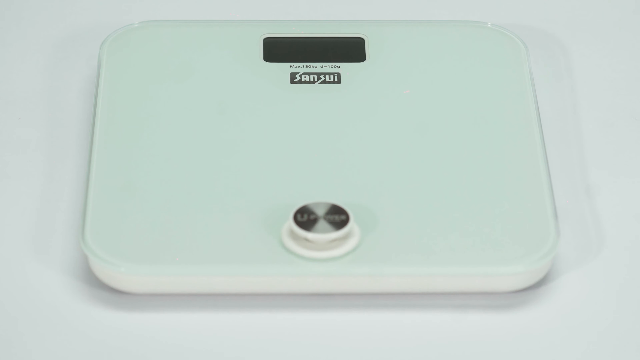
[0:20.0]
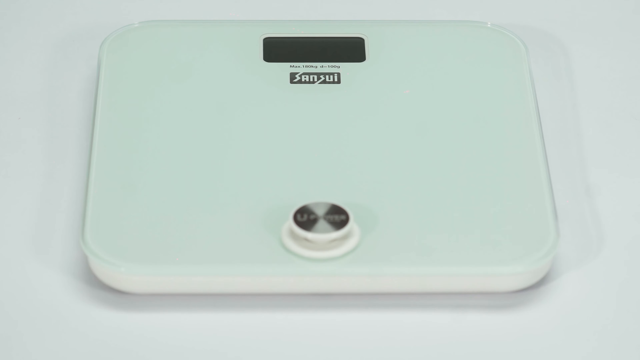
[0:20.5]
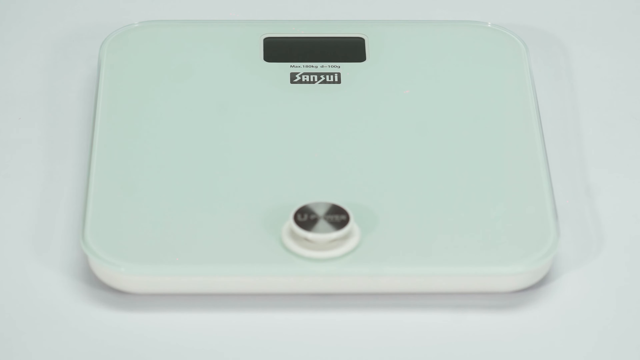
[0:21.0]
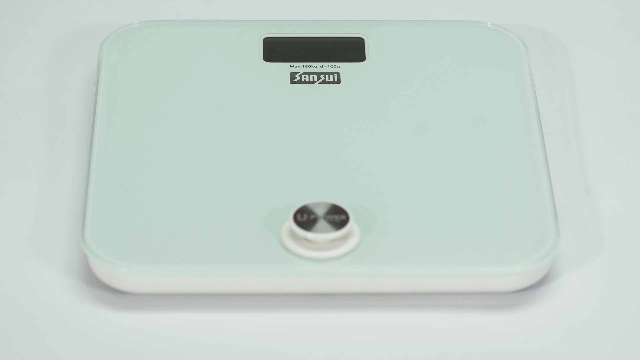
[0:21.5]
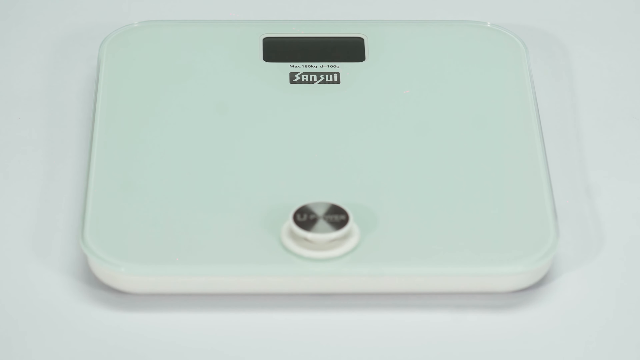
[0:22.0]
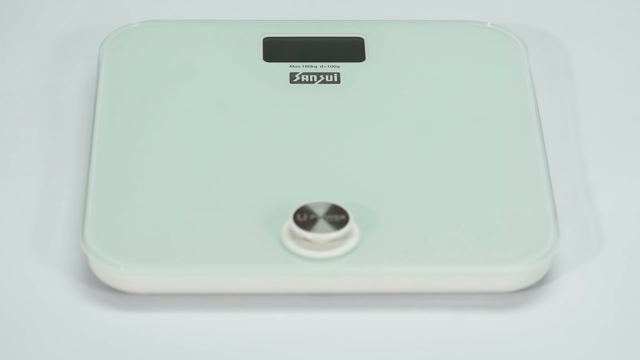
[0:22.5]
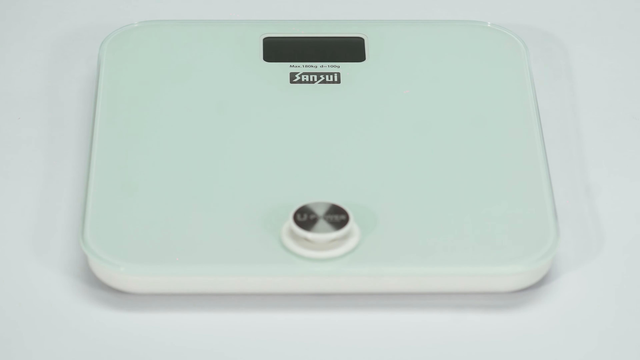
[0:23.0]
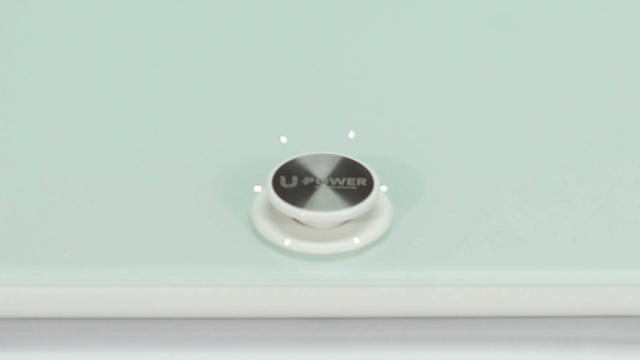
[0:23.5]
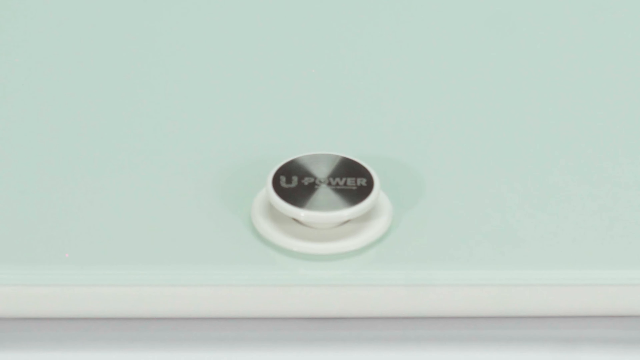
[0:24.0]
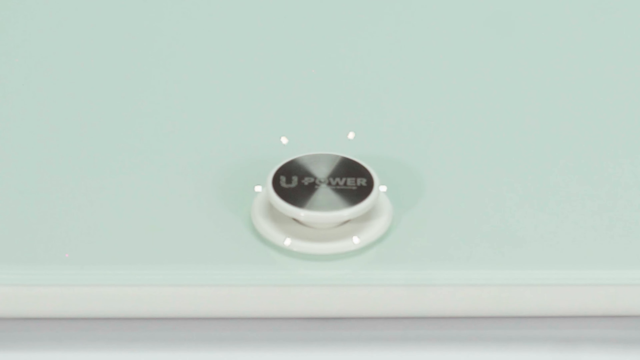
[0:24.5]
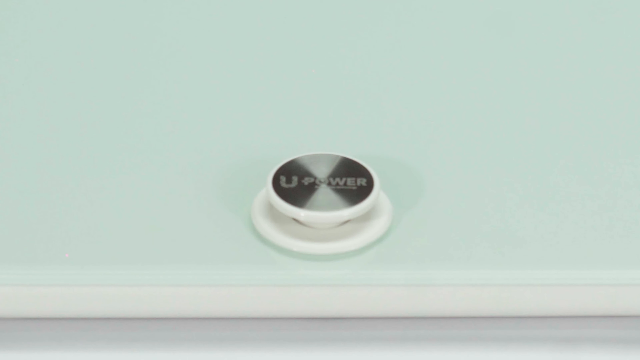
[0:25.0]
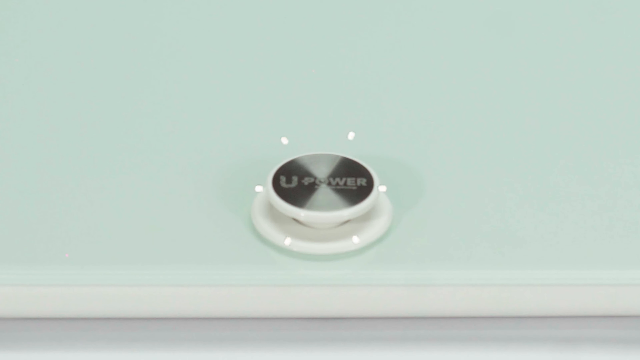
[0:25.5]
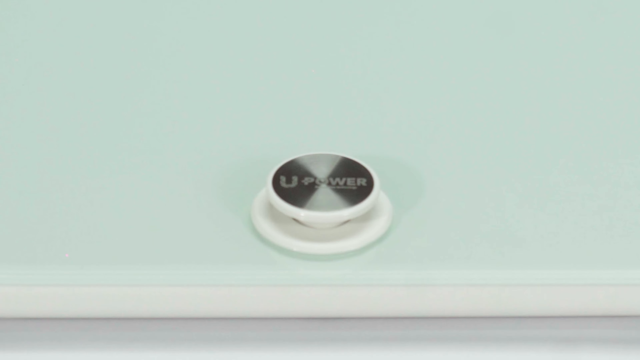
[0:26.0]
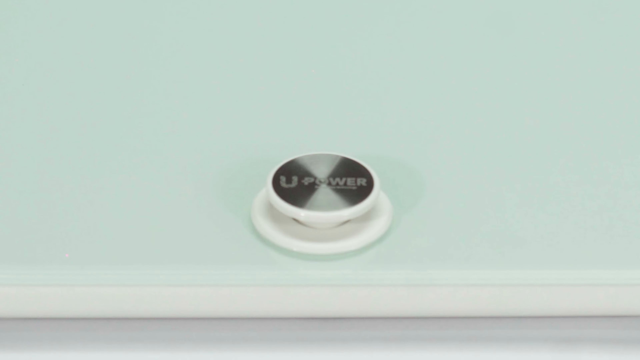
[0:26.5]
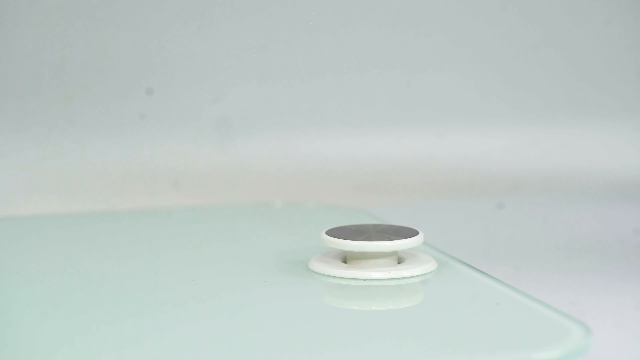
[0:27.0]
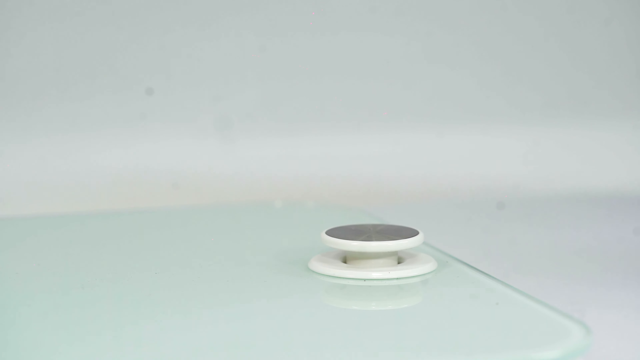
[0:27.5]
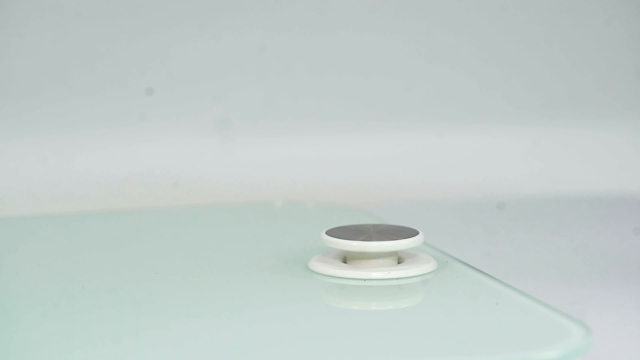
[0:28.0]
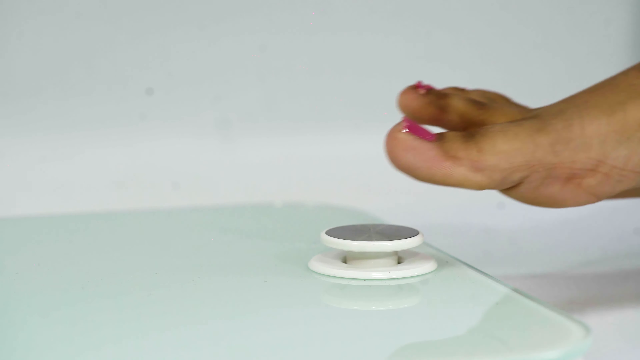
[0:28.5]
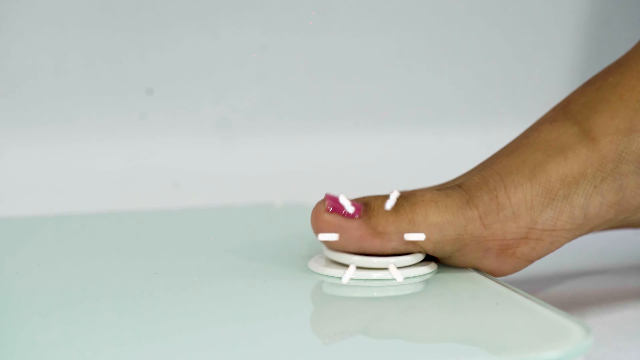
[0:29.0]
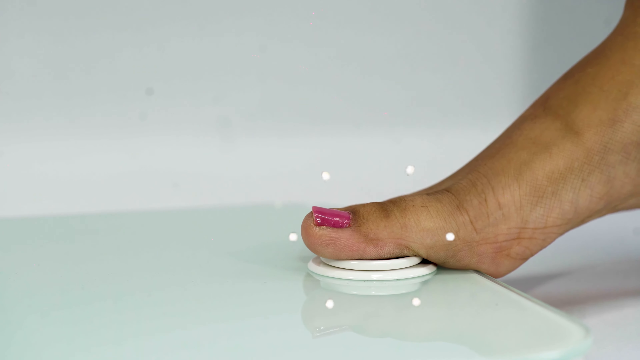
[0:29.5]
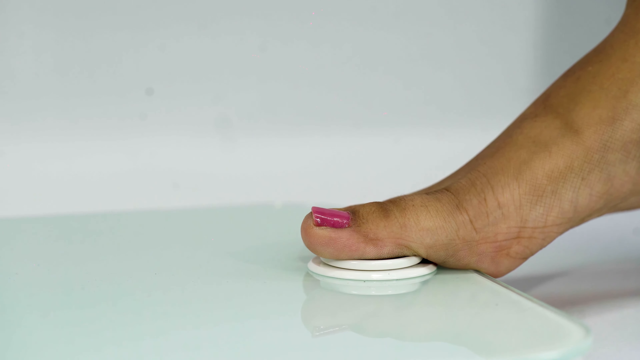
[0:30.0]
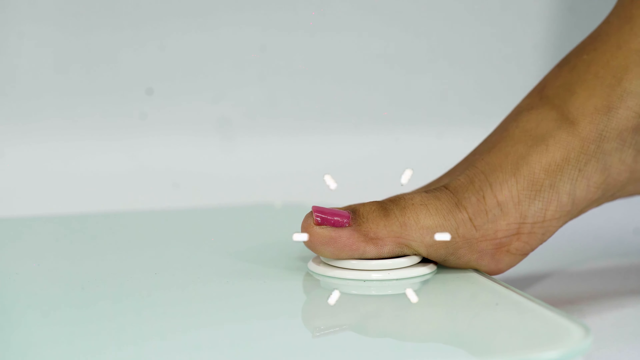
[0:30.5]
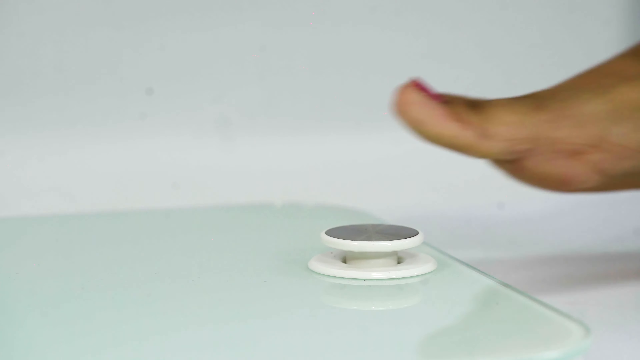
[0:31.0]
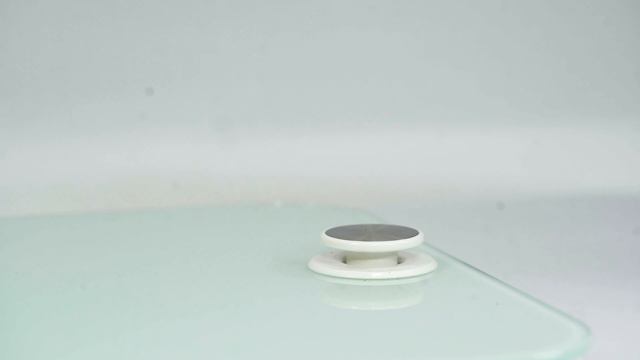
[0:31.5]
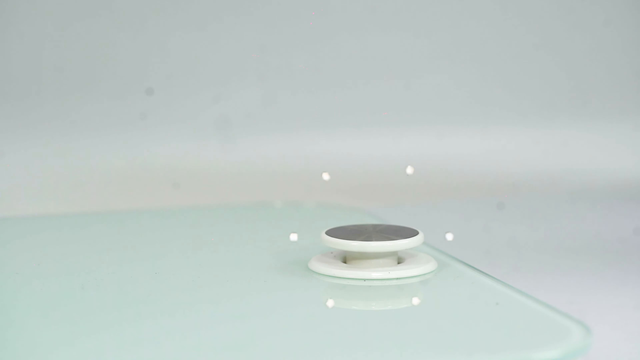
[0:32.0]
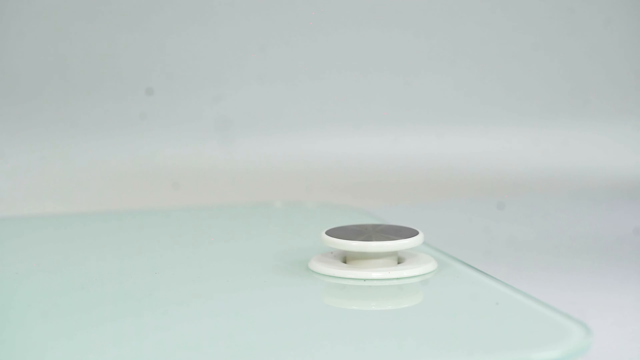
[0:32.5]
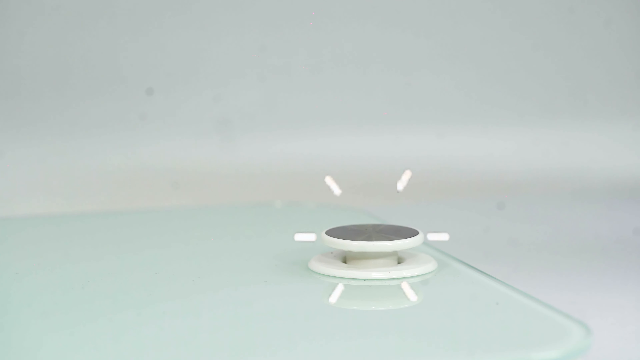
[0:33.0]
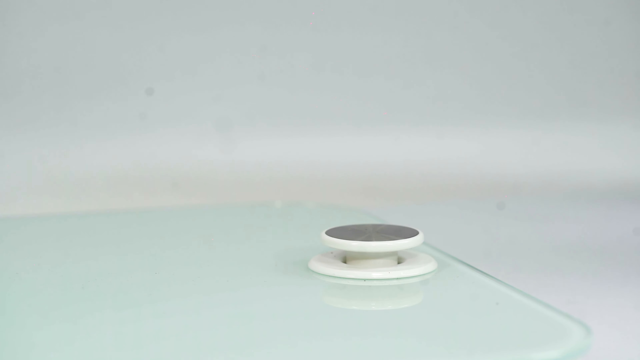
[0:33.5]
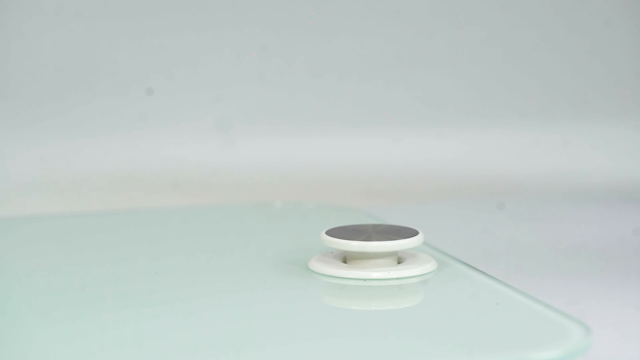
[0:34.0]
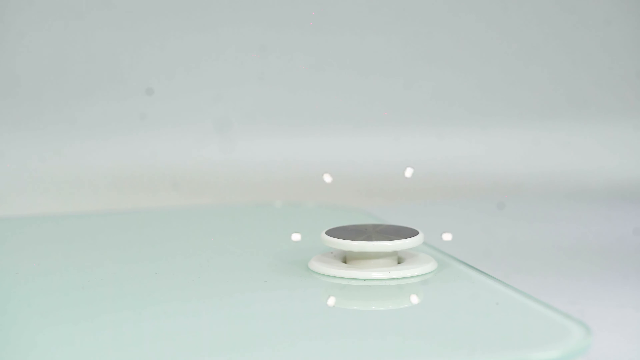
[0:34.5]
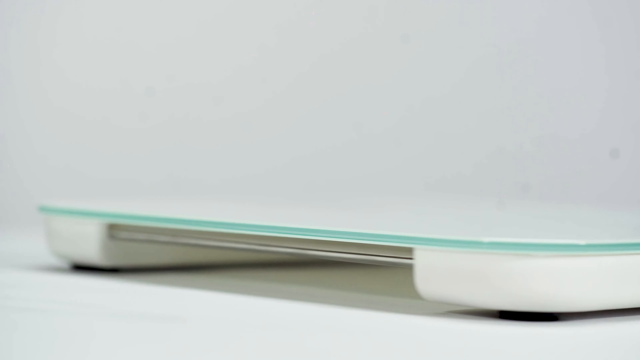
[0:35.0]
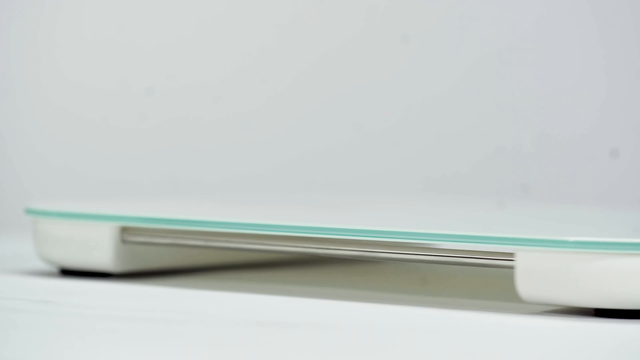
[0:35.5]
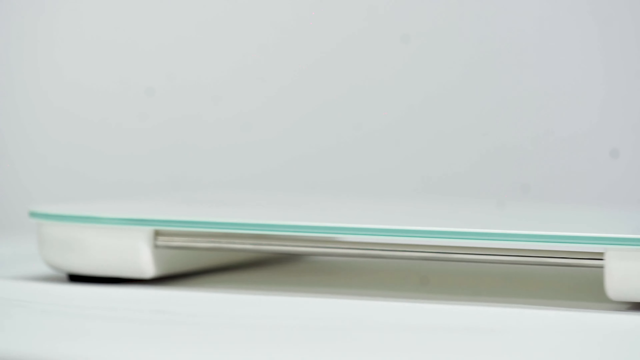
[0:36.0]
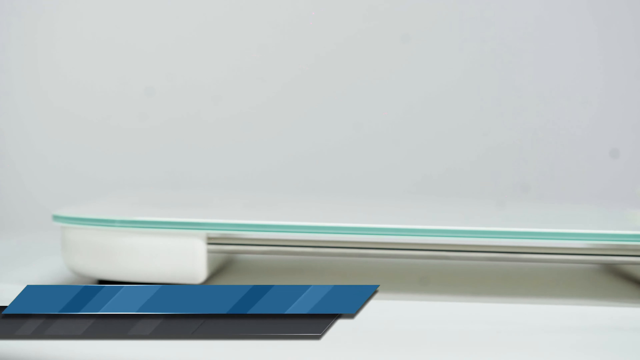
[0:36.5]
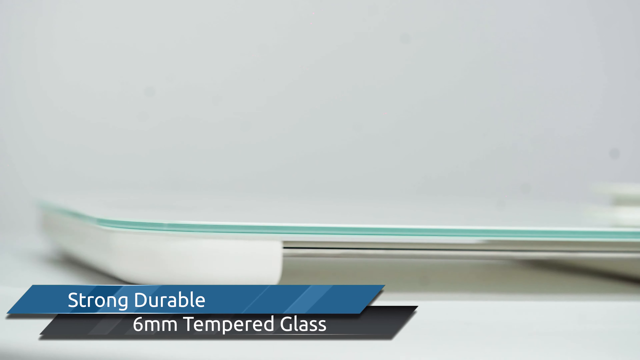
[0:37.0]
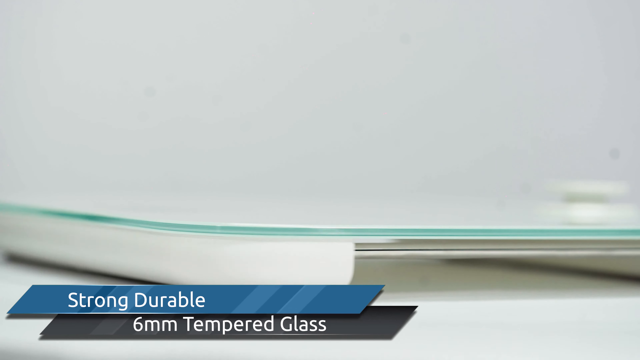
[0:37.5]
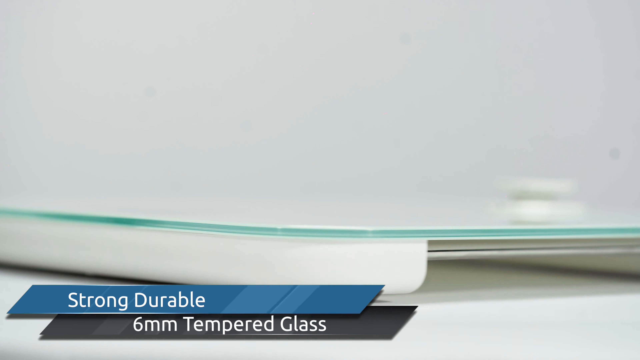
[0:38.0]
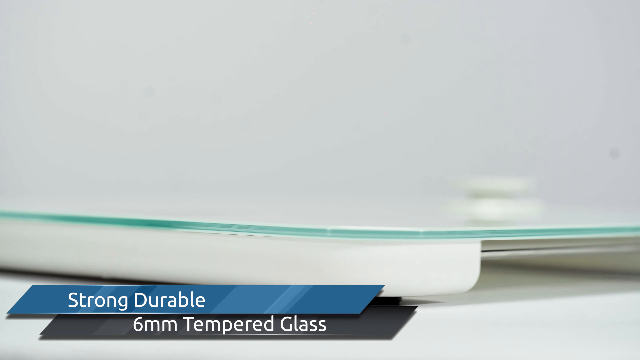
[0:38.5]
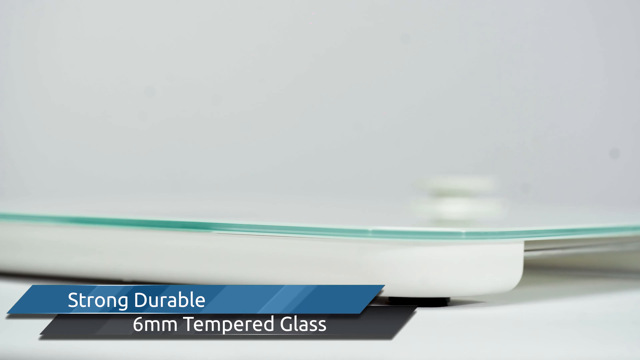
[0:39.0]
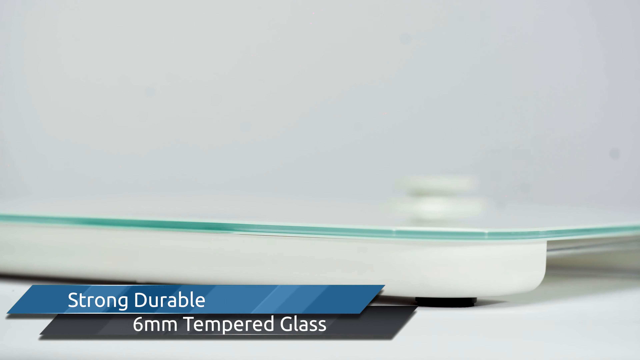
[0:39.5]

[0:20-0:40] Some lights and white scales with "Sansui" written on them are shown. A woman's toe, with pink nail varnish, presses a button that appears to be on the scales, and the button appears to light up. The scales look as though they have glass on top. The button is shown with words on it, and then the foot is seen pressing the button with the toe. The scales appear very well made and hollow underneath. This repeats over and over, with the scales going round and round. The words "Strong, durable 2mm tempered glass" appear at the bottom of the screen.